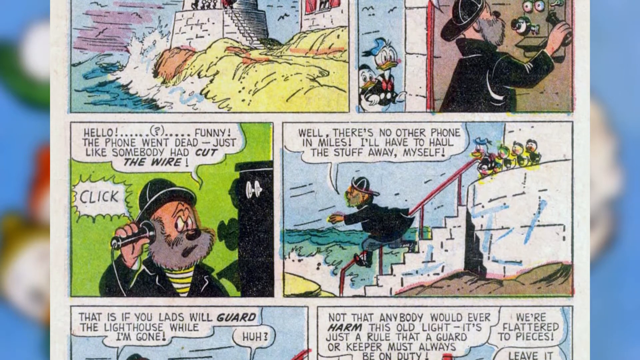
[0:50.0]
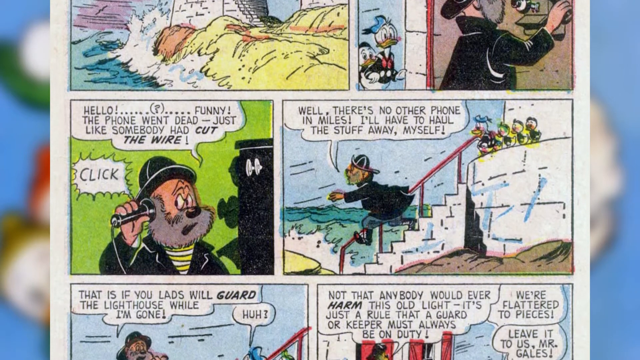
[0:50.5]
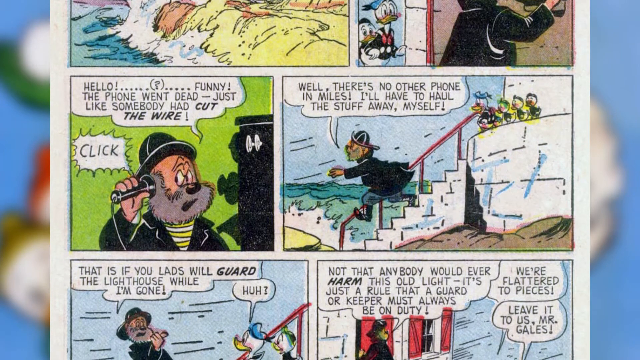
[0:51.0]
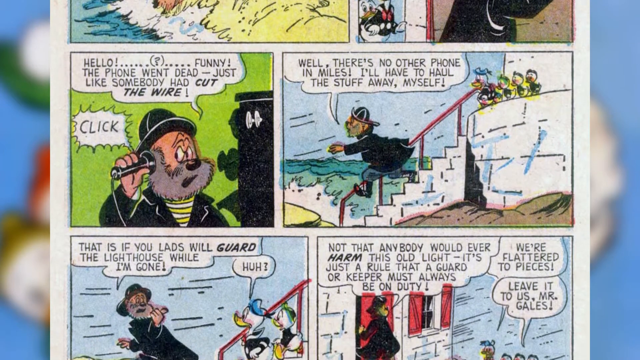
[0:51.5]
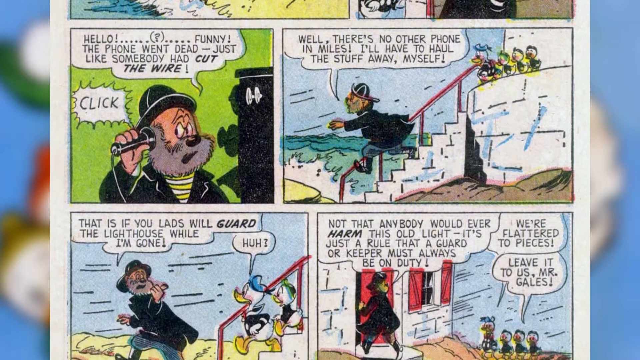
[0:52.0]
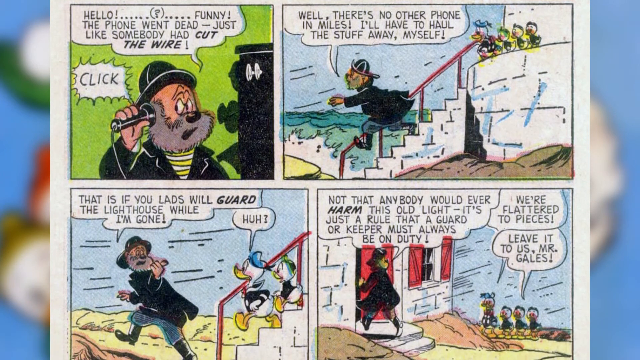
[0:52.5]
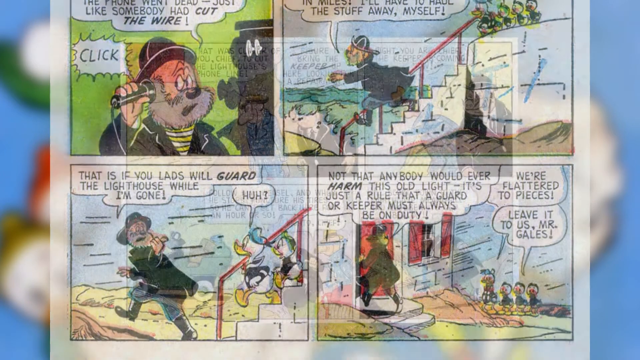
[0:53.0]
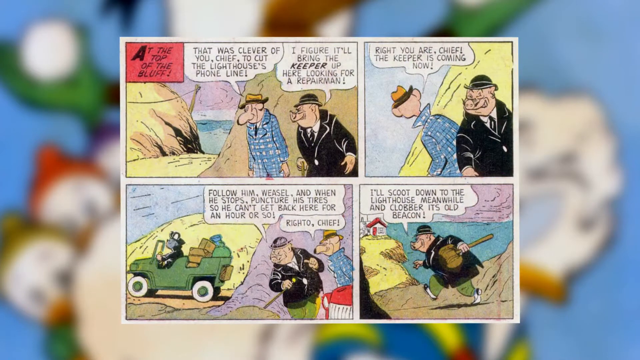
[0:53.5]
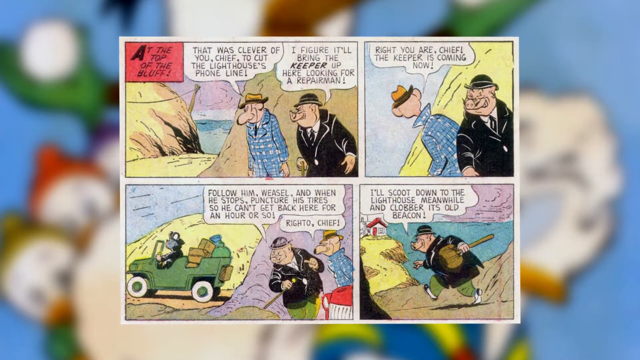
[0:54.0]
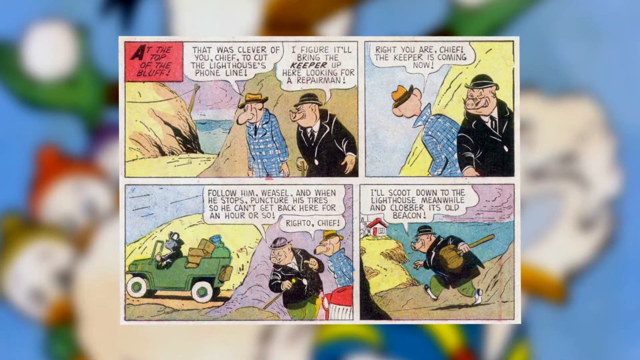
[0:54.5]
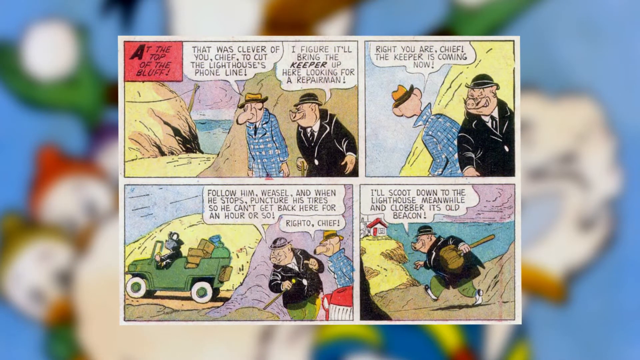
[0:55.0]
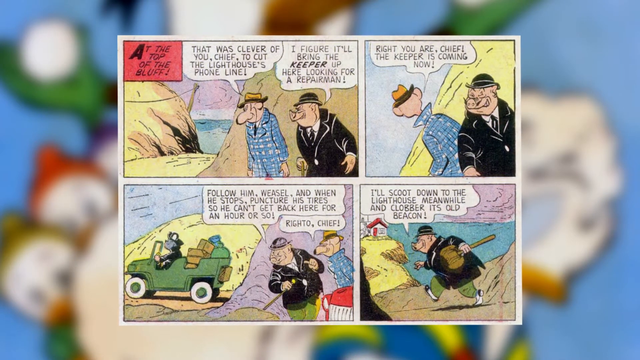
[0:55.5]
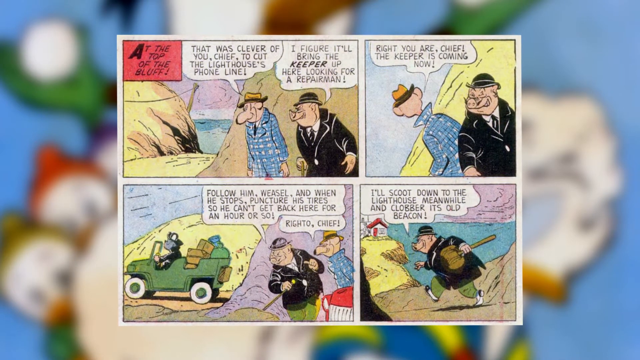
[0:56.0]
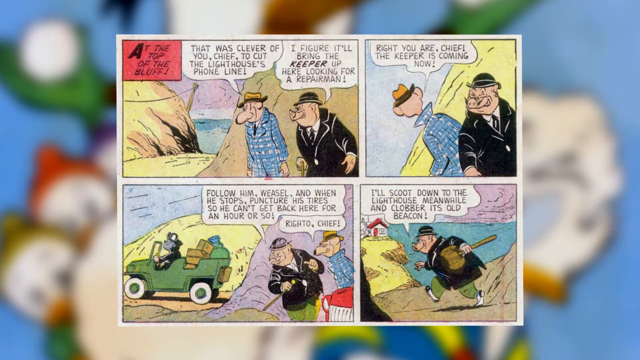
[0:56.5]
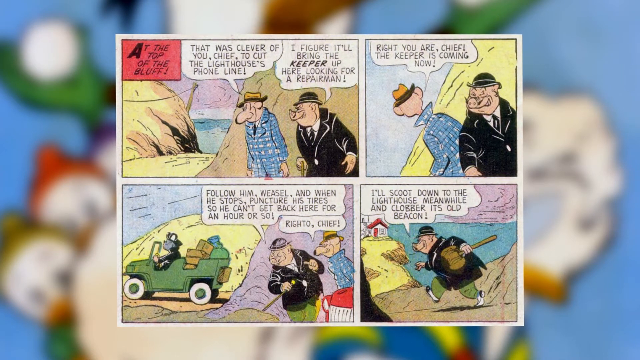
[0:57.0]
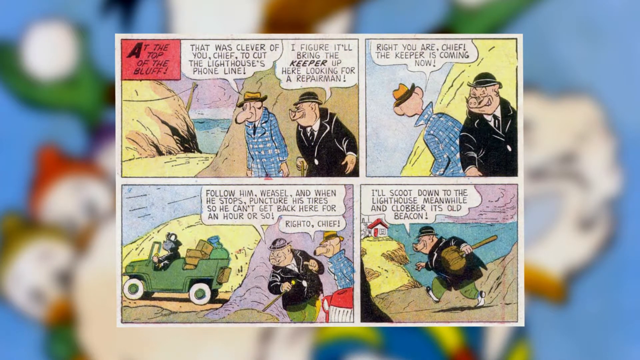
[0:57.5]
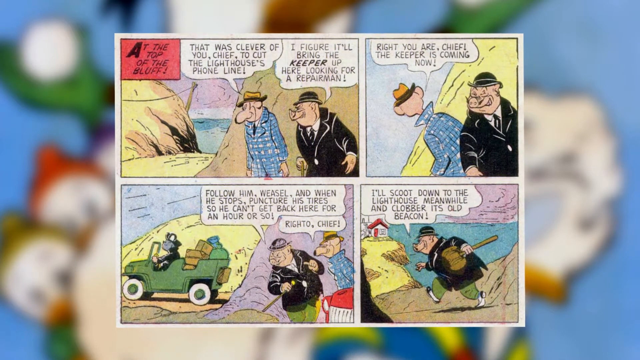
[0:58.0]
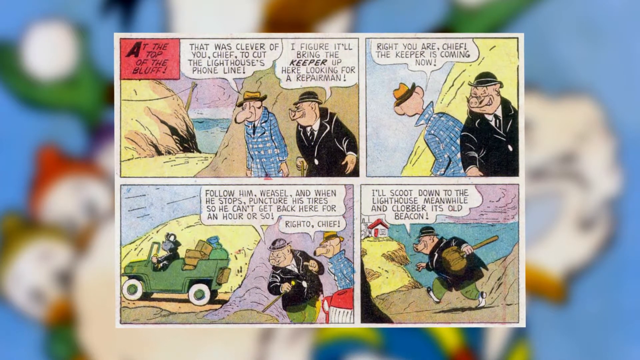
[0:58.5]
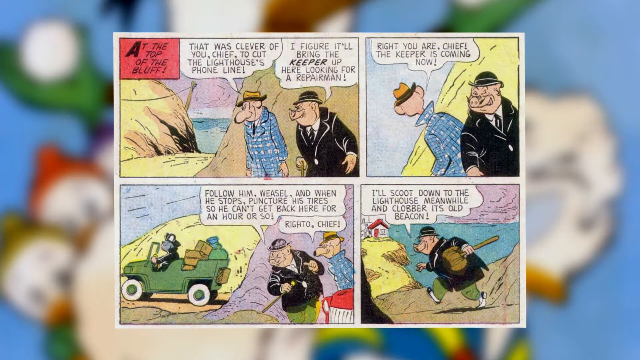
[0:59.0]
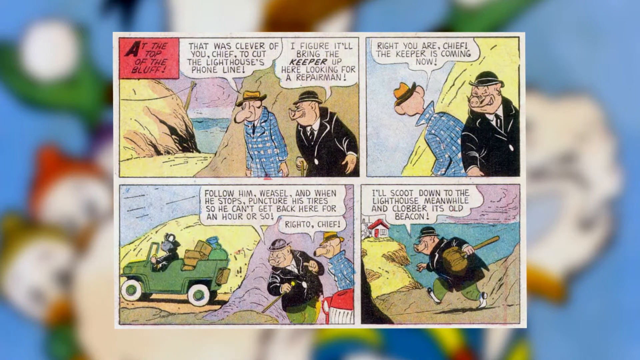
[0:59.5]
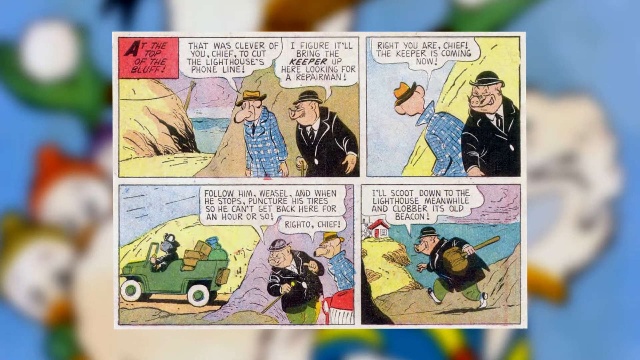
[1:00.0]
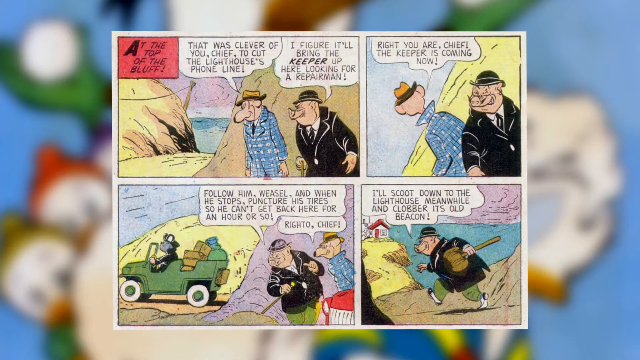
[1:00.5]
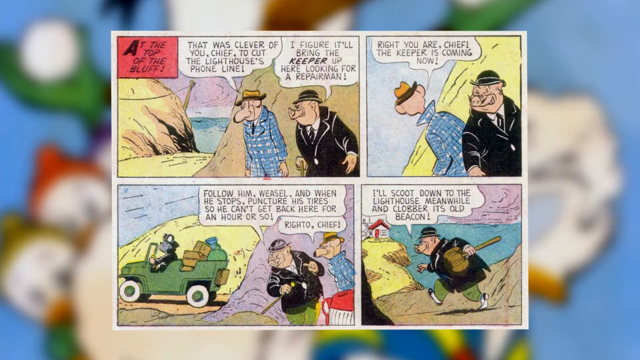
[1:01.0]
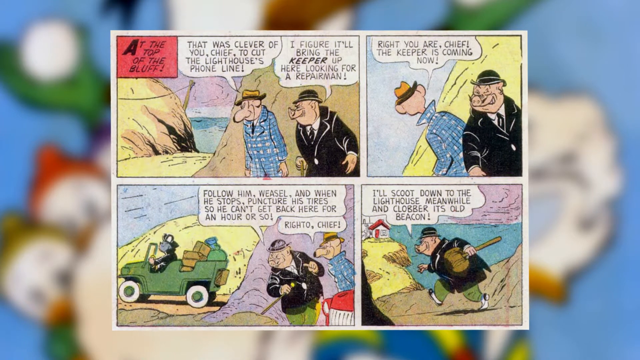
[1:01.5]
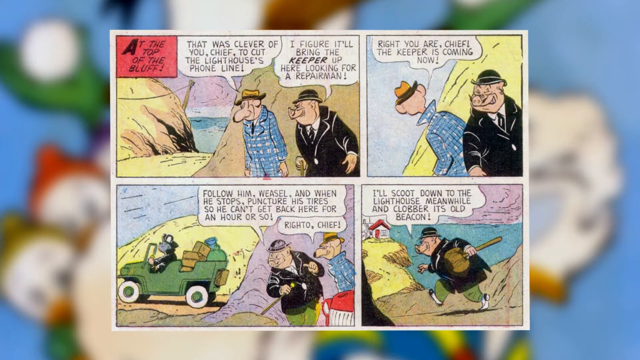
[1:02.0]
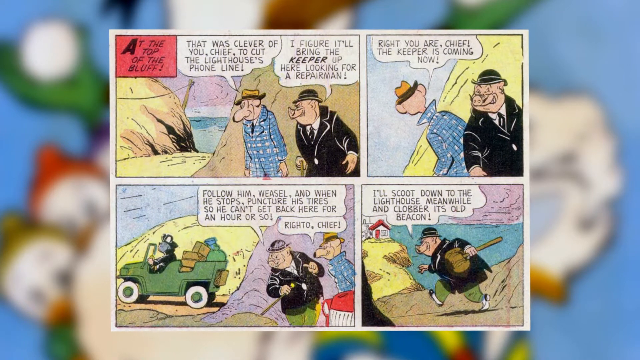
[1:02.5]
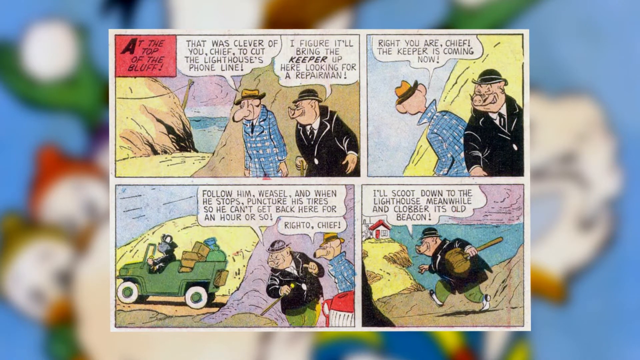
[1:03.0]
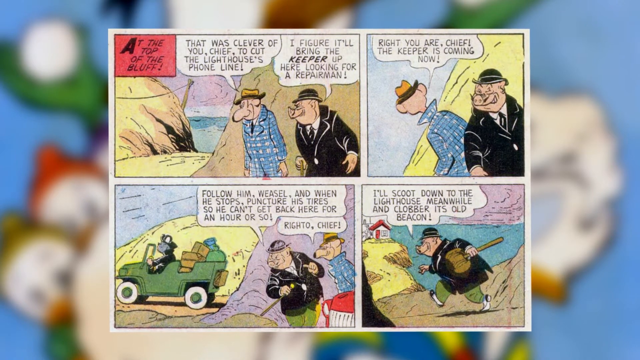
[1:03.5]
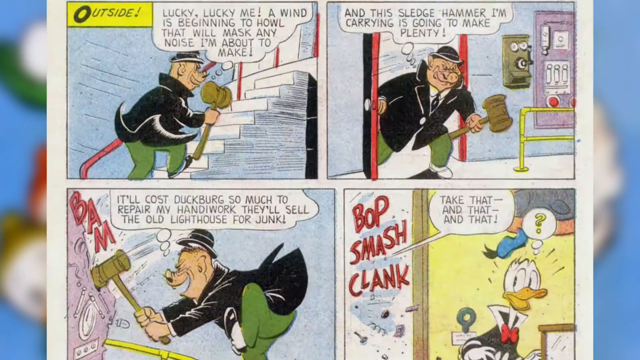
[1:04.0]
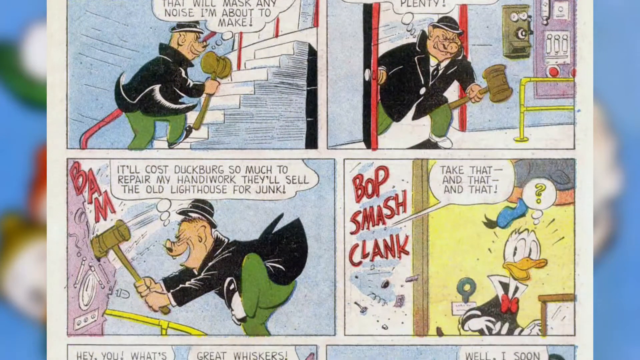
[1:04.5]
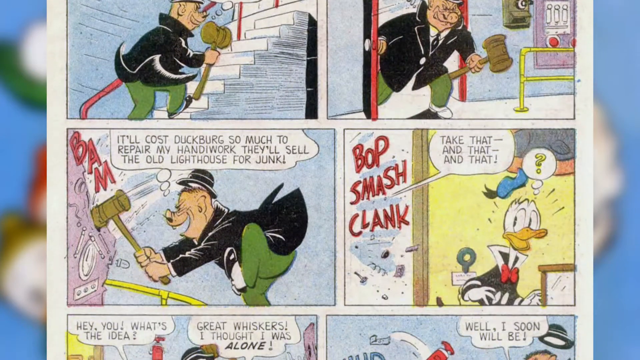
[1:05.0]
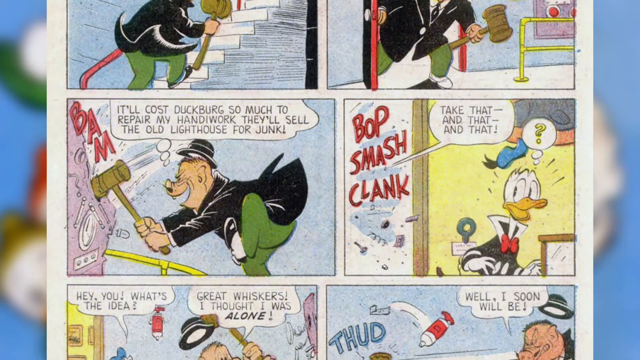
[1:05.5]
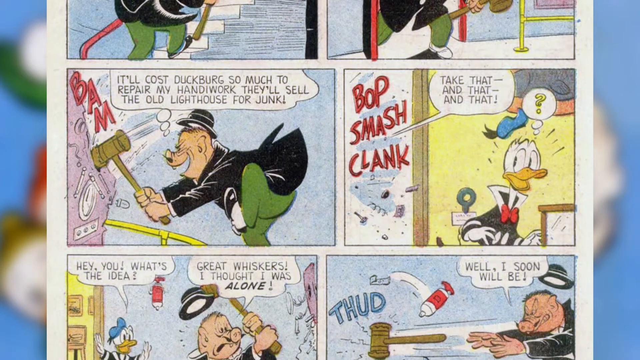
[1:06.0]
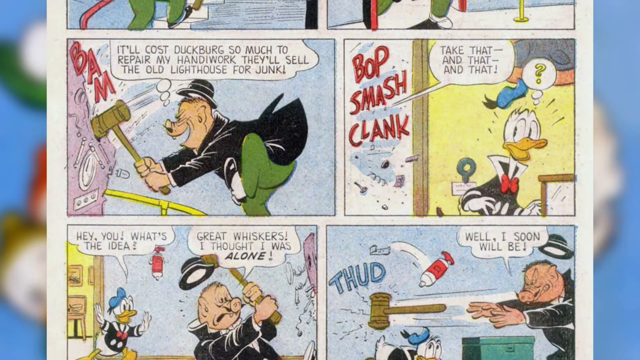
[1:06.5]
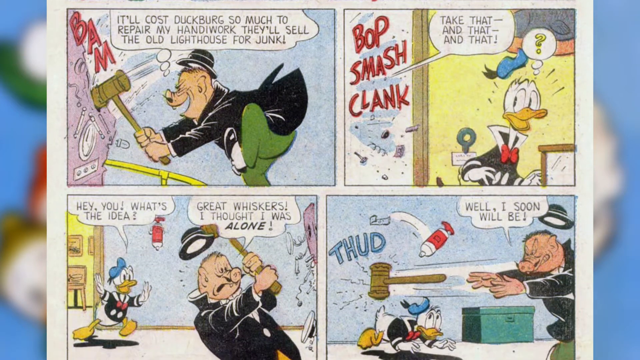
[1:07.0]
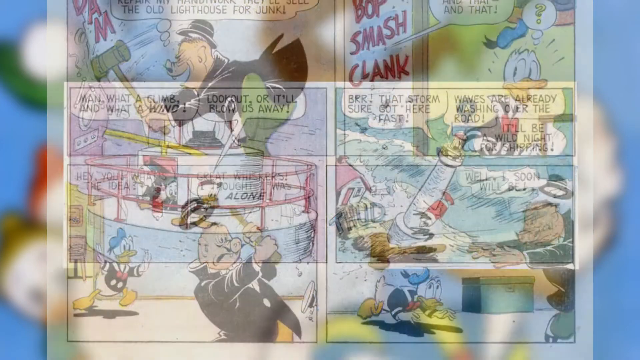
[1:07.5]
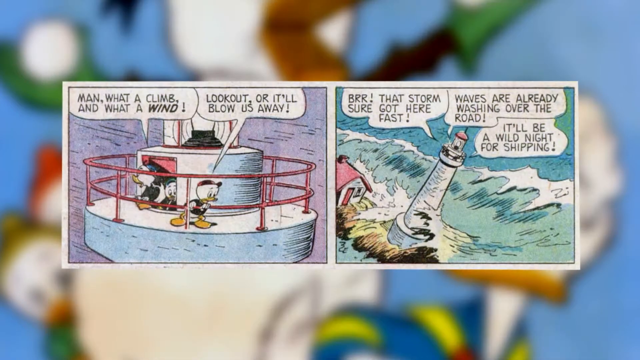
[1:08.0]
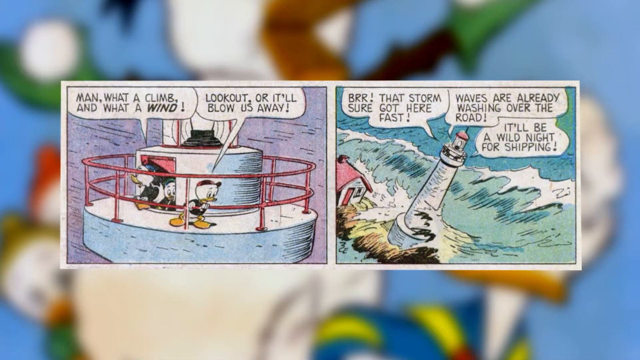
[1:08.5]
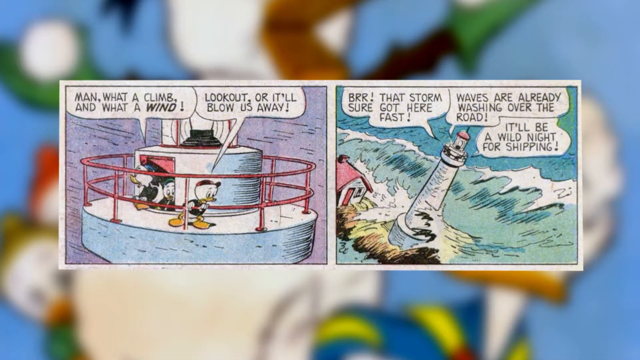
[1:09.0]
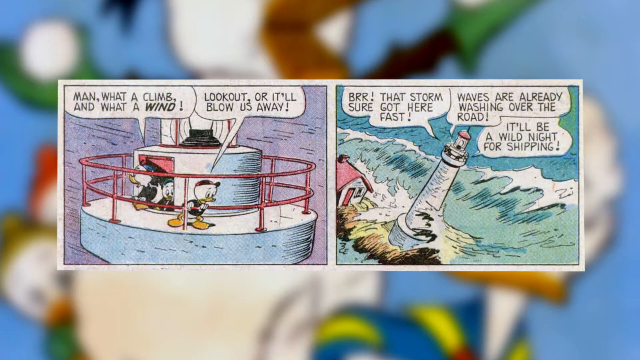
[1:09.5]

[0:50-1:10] Daffy Duck and the three little ducks are at the lighthouse with the lighthouse keeper, who is trying to call for help to prepare for the oncoming storm. The power seems to have been cut off, so the lighthouse keeper has to move his things away from the cottage himself. He gives the ducks the task of guarding the lighthouse and taking over his duty, which flatters the little ducks, and they agree enthusiastically. Another strip shows the businessman pig and his partner kind of hiding behind a large rock, discussing how the plan of cutting the phone line went well, and they kind of concoct a plan to follow the lighthouse keeper while he tries to save his things so they can take the lighthouse. Their plan is to kind of damage the lighthouse with a hammer so badly that the lighthouse keeper will be forced to sell it for junk. The pig approaches the lighthouse and starts smashing at it, which alarms Daffy Duck, who confronts the businessman pig. Meanwhile the three little ducks are kind of on top of the lighthouse, standing guard and watching the storm come in.